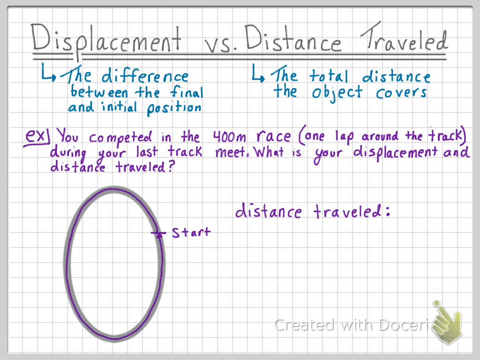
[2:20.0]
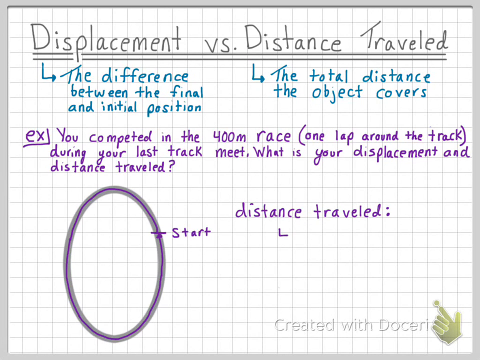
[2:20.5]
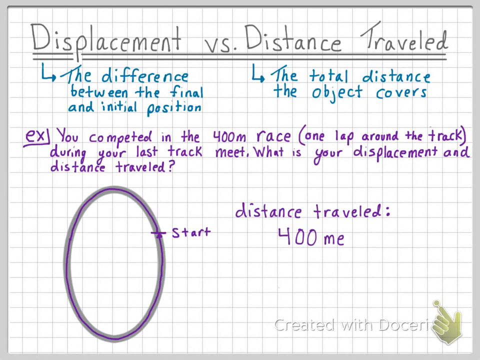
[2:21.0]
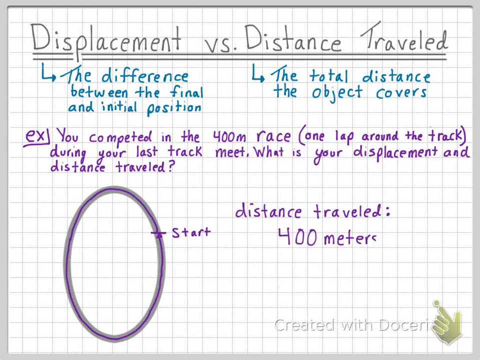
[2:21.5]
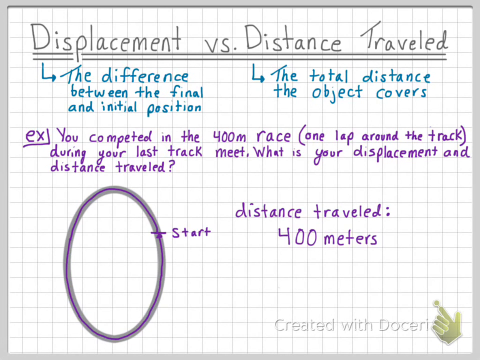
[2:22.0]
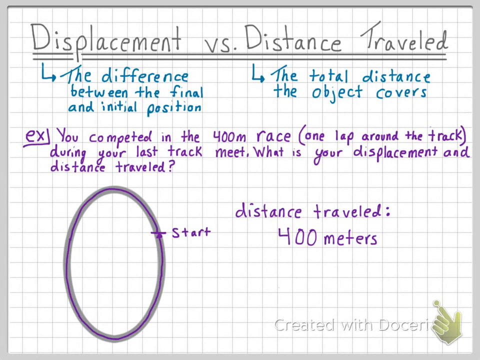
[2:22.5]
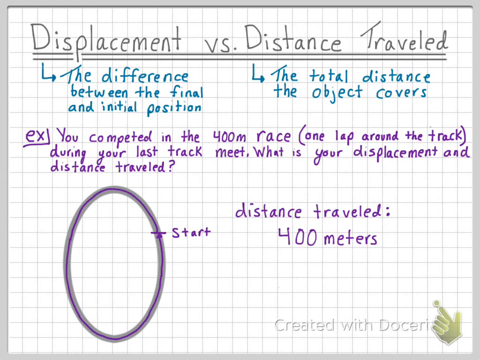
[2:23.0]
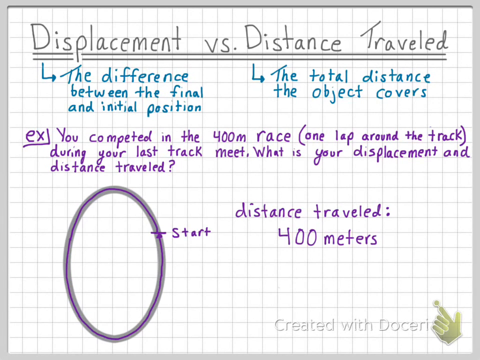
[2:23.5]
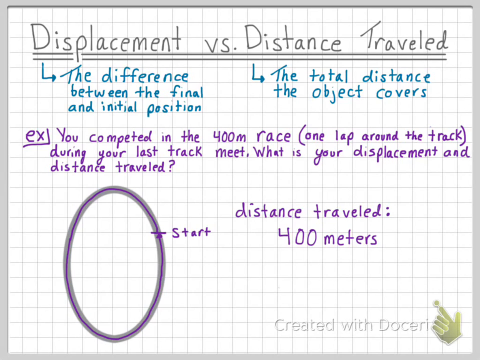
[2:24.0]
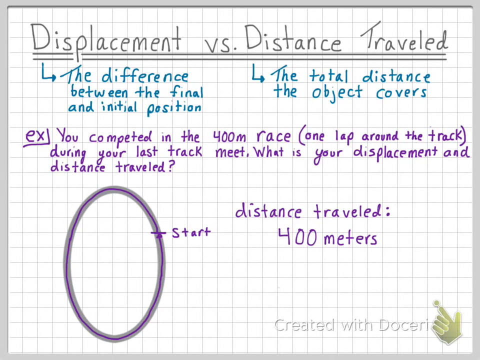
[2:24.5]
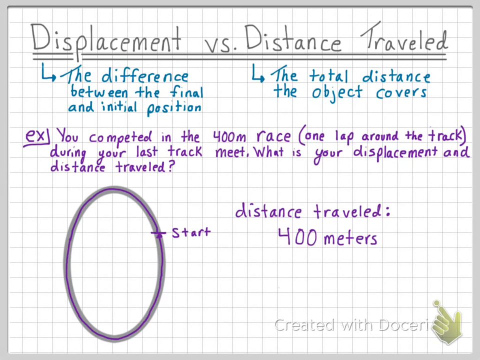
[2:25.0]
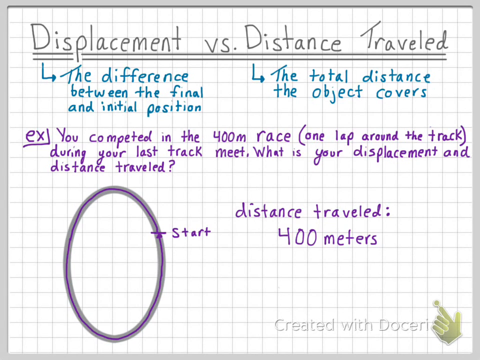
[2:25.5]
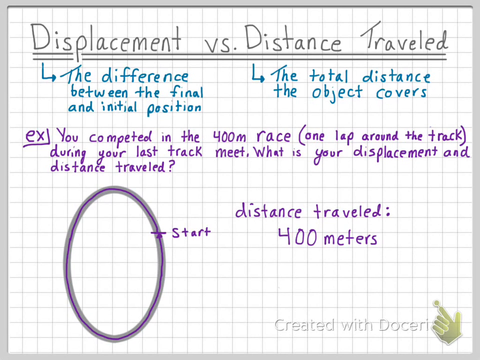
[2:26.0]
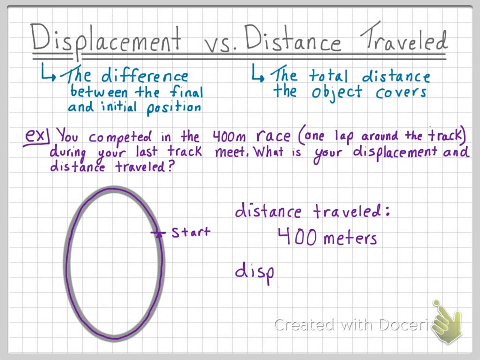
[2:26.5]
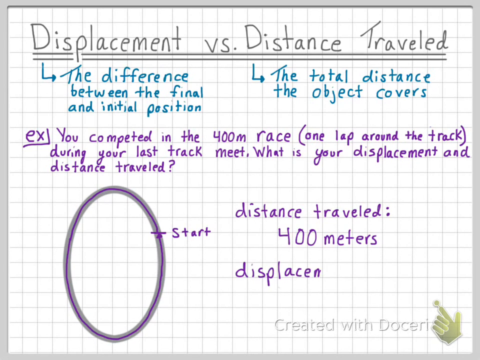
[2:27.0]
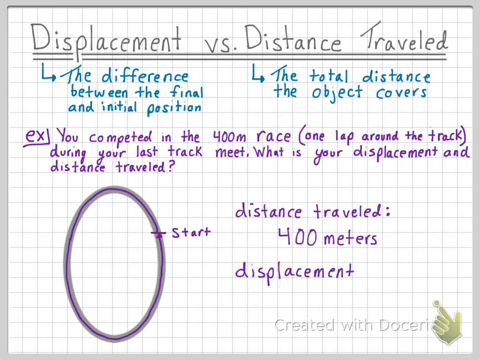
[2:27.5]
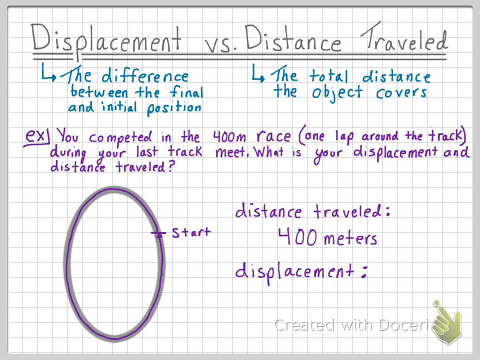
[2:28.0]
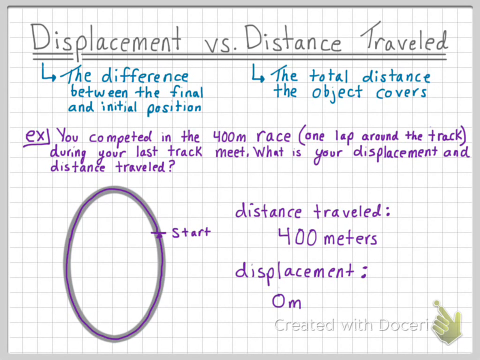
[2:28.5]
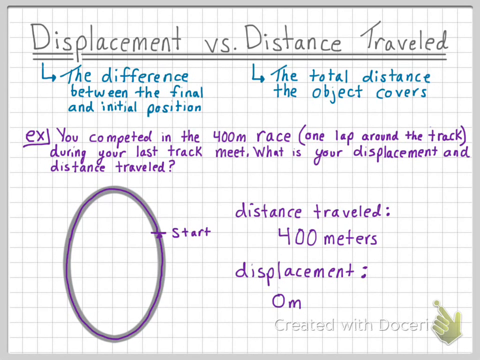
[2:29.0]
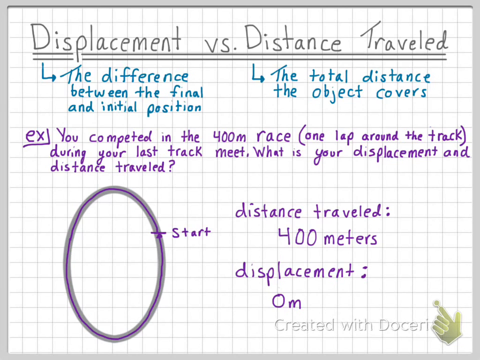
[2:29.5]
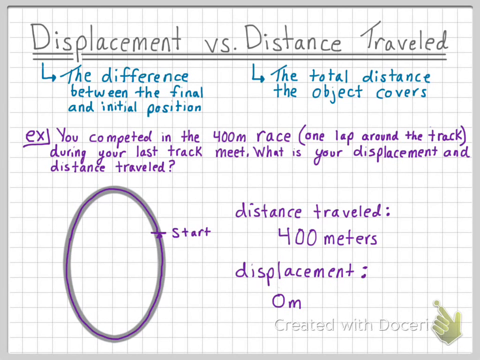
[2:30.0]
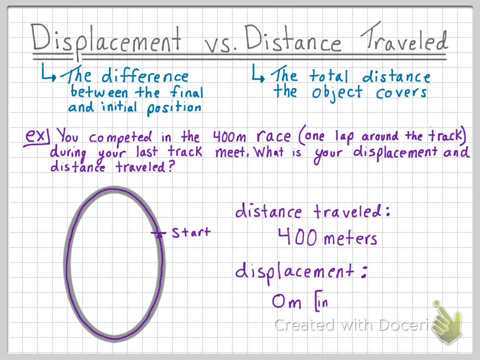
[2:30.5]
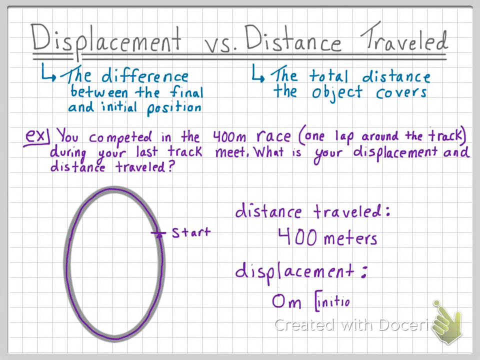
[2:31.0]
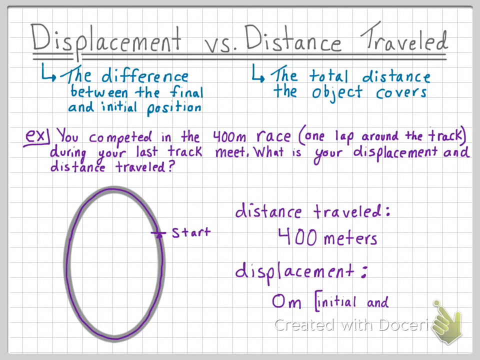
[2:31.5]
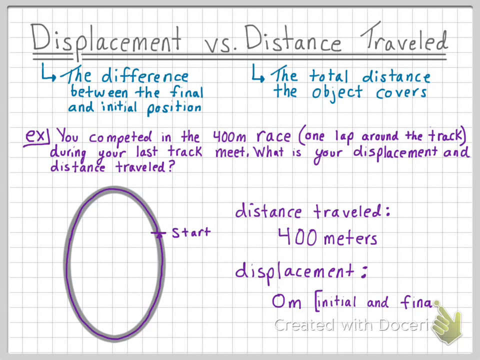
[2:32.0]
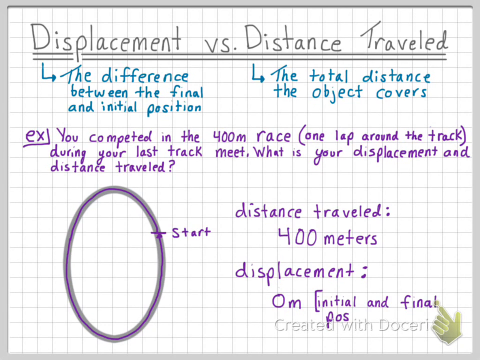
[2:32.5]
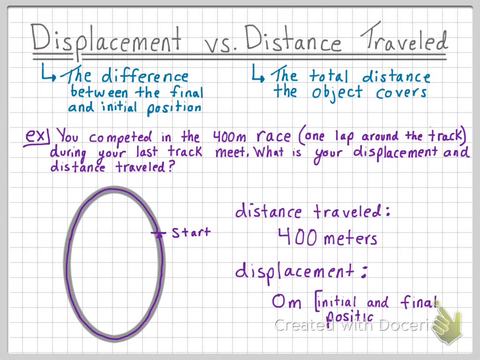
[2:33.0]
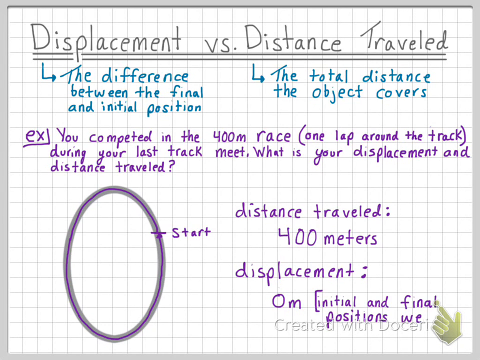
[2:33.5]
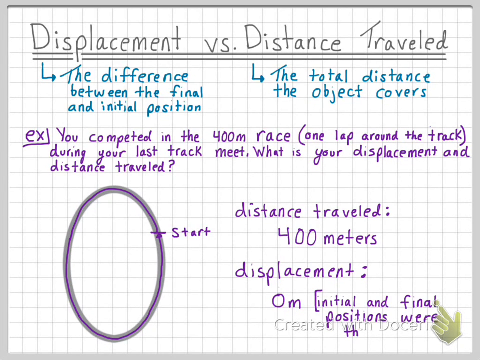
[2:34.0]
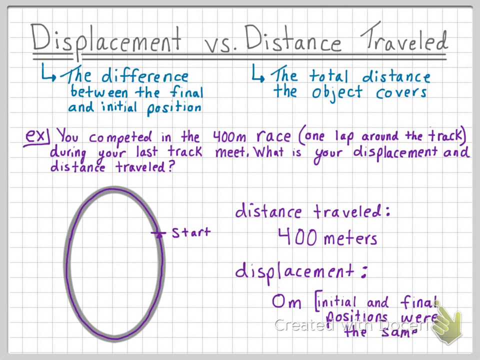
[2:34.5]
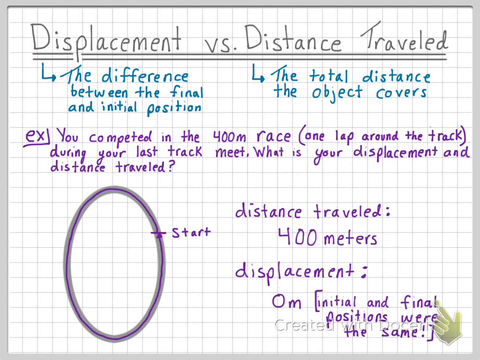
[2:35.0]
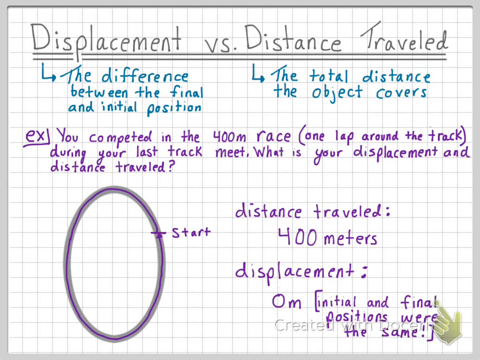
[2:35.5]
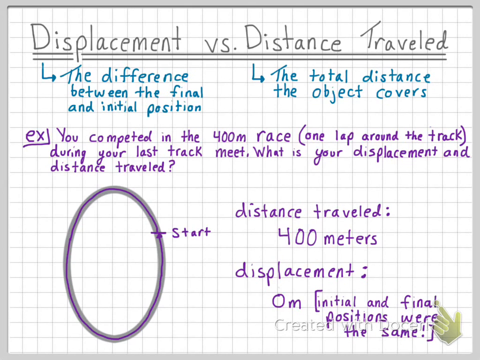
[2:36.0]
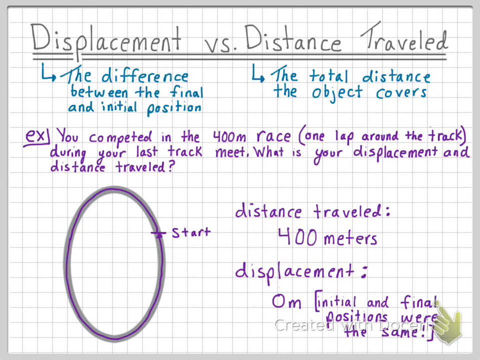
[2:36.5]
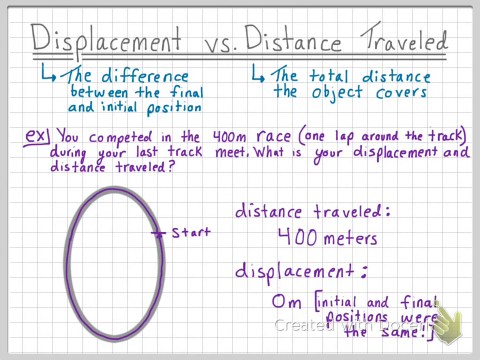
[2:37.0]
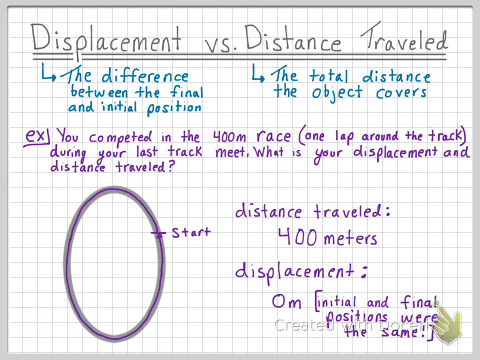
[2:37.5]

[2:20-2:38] The whiteboard holds the same information, with the path around the track traced in purple. The distance traveled is 400 meters, once around the track, and the displacement is written in purple as "0 meters", since the run ended where it started. The watermark of a hand pointing at a dot is still there. The font is made to look like handwriting rather than typing, possibly because someone is actually writing it.